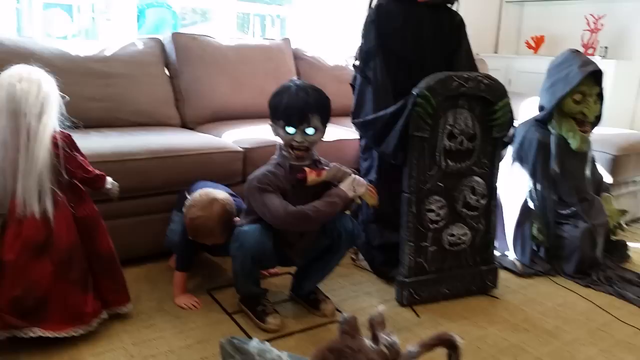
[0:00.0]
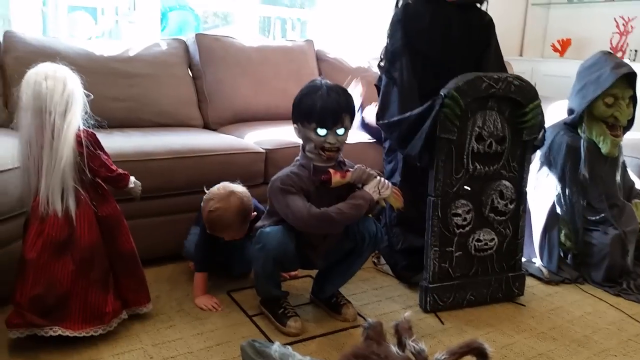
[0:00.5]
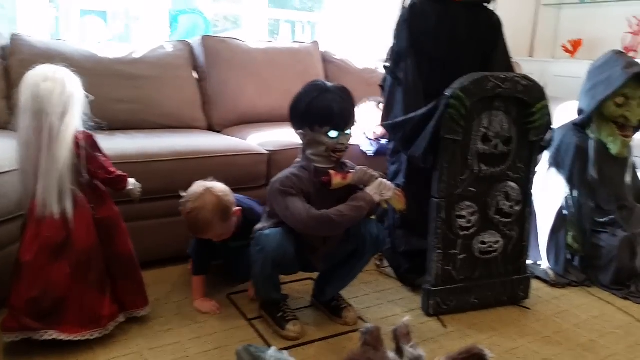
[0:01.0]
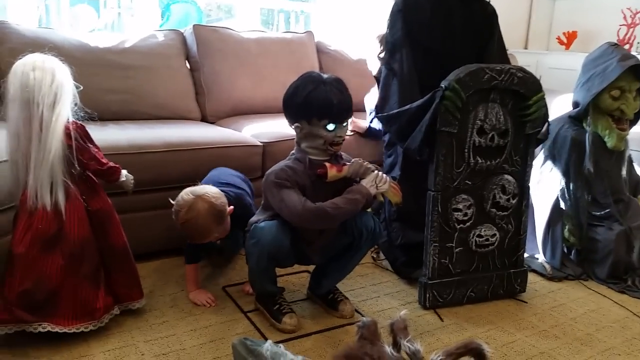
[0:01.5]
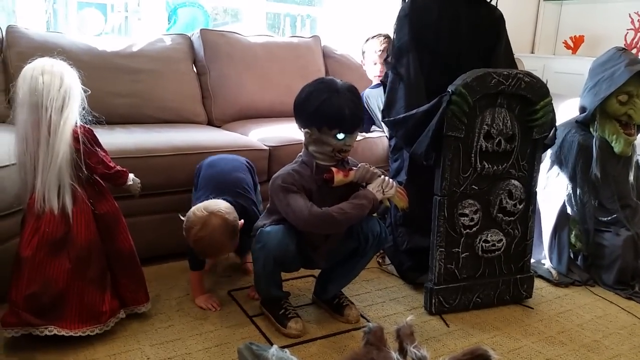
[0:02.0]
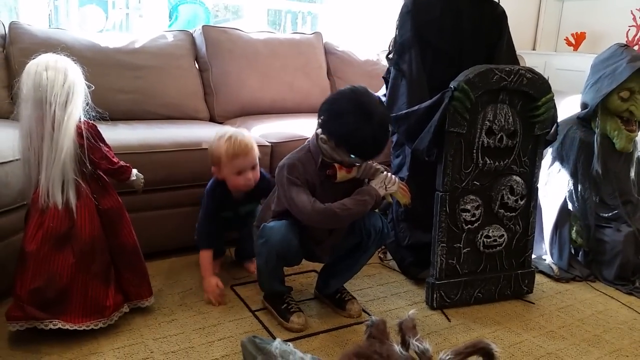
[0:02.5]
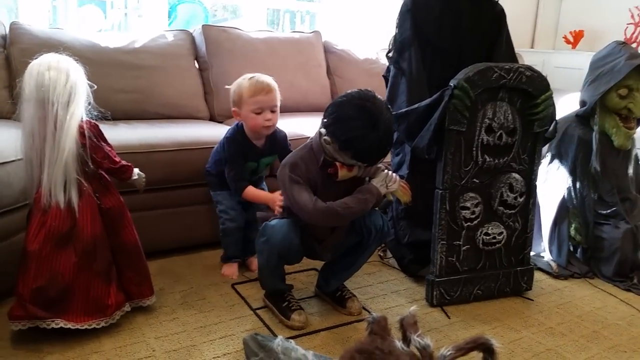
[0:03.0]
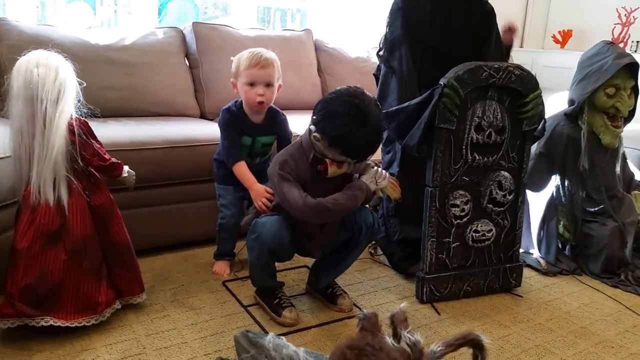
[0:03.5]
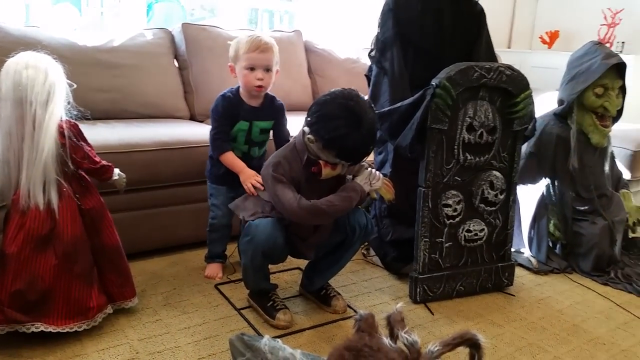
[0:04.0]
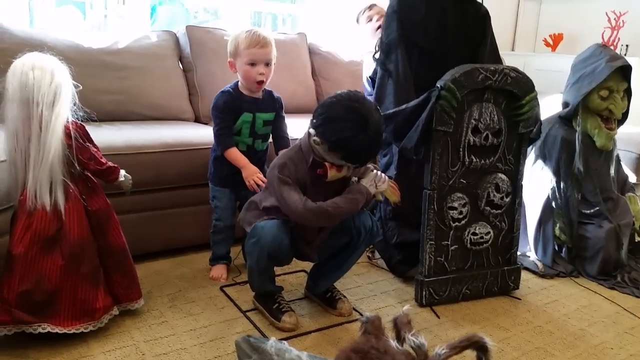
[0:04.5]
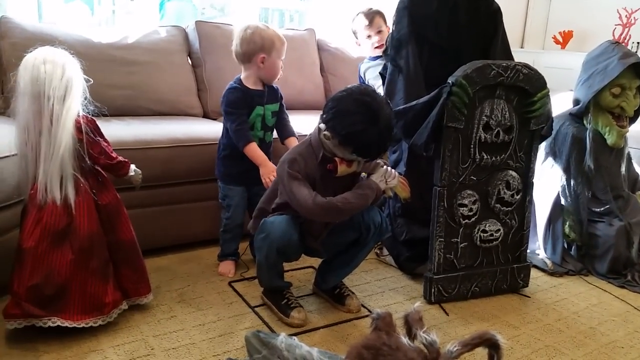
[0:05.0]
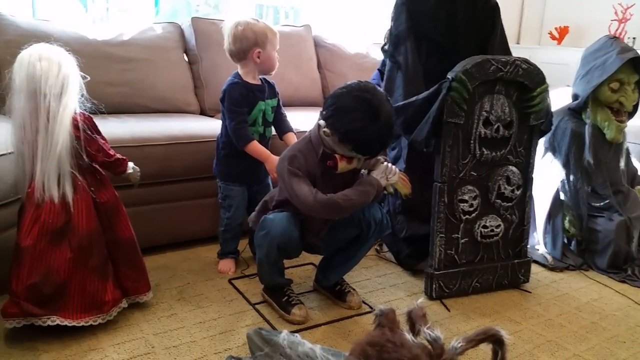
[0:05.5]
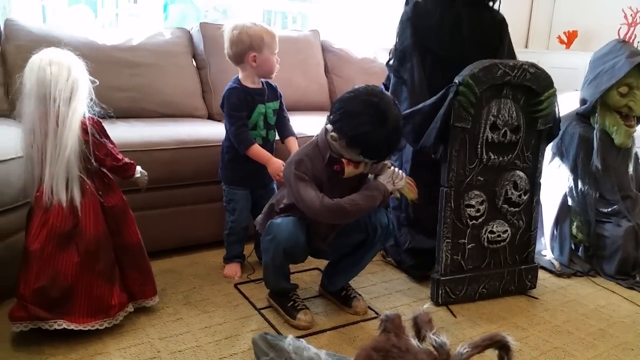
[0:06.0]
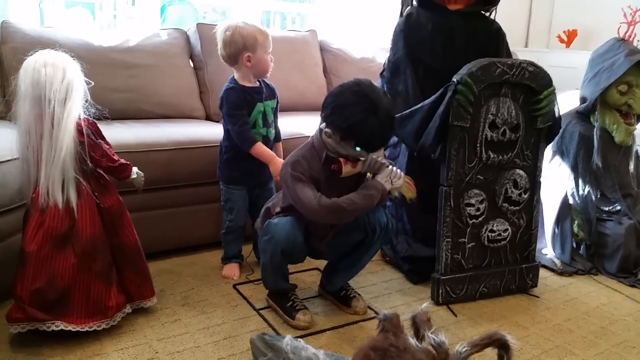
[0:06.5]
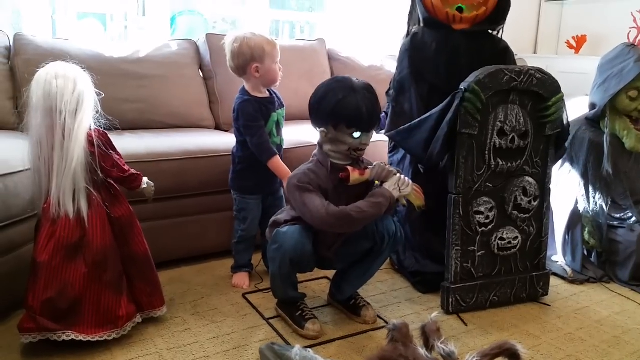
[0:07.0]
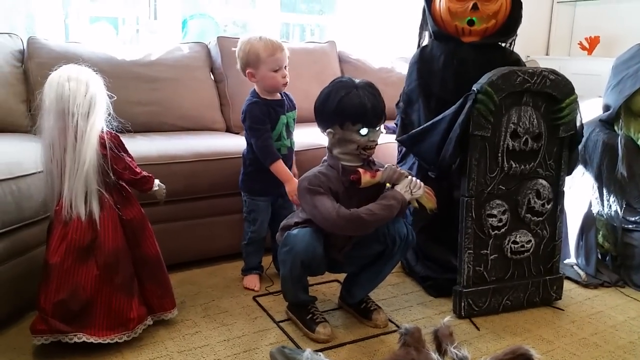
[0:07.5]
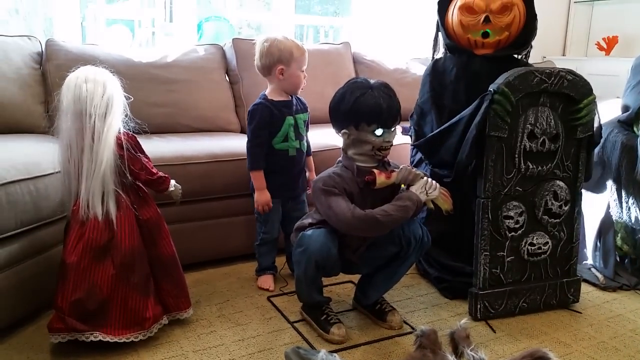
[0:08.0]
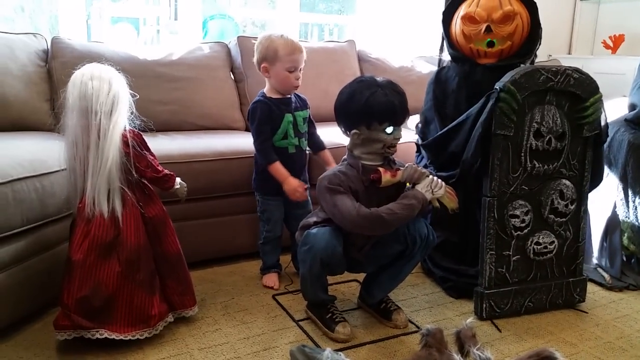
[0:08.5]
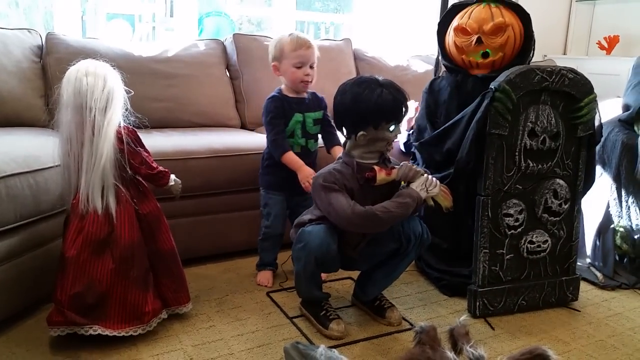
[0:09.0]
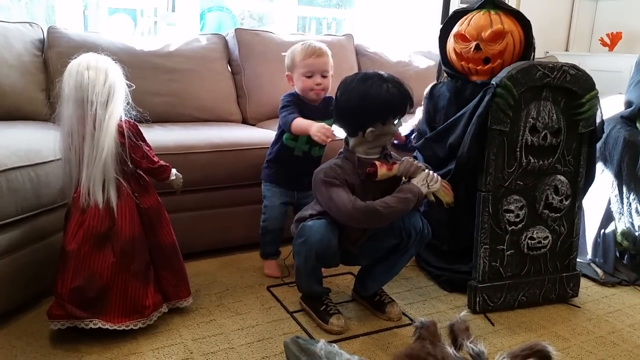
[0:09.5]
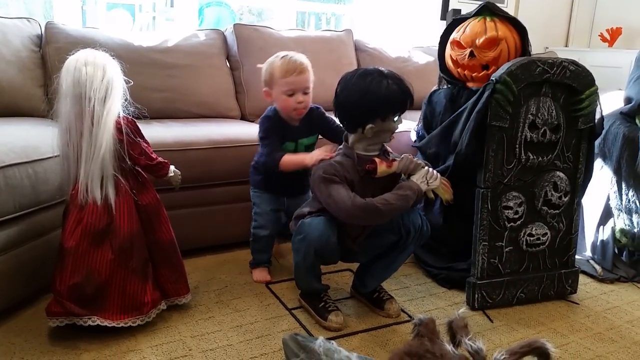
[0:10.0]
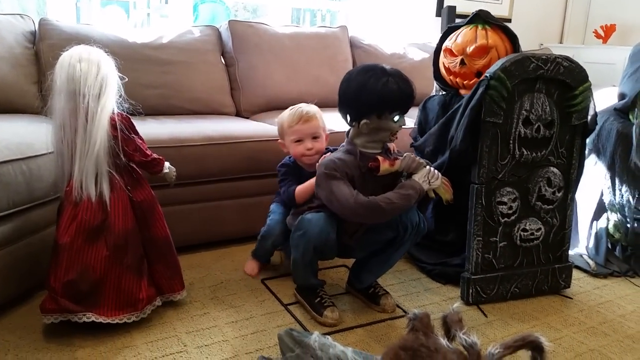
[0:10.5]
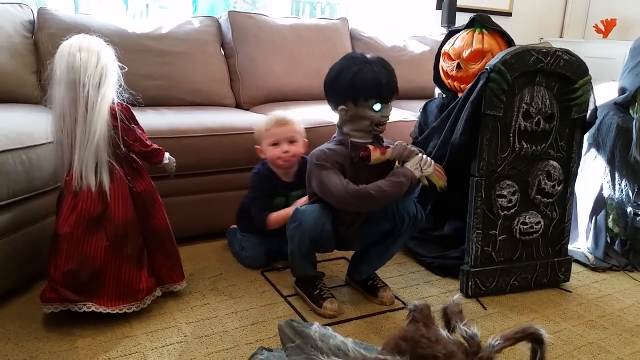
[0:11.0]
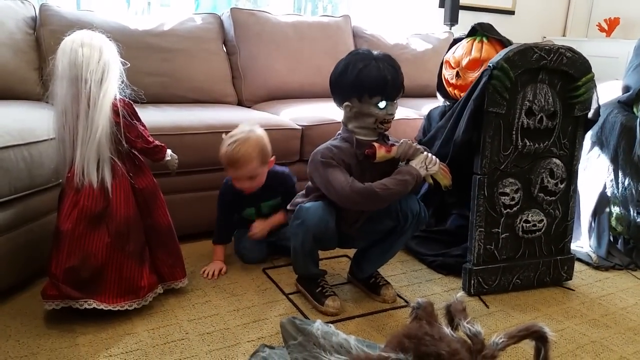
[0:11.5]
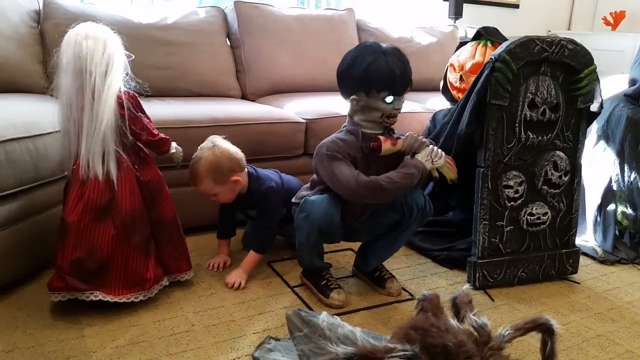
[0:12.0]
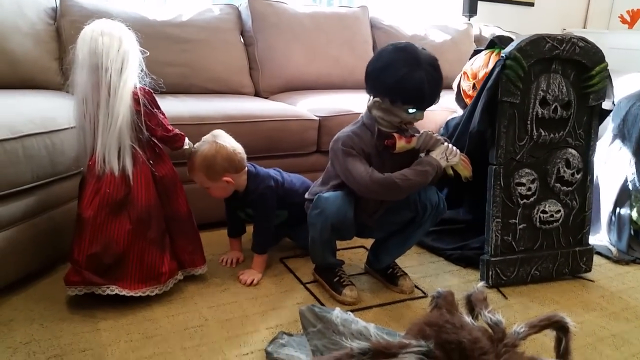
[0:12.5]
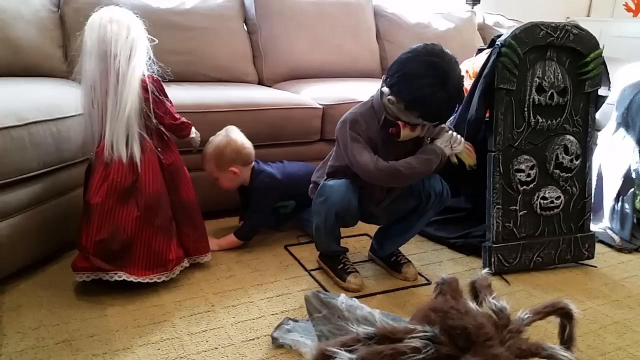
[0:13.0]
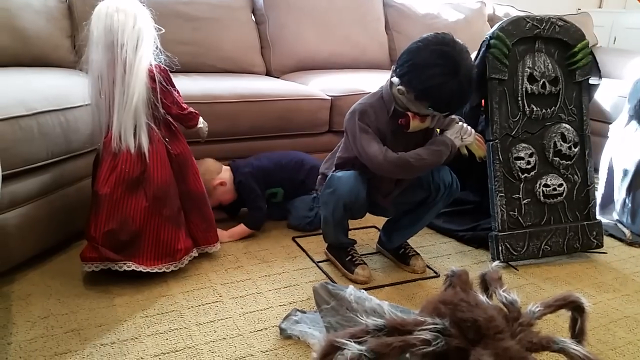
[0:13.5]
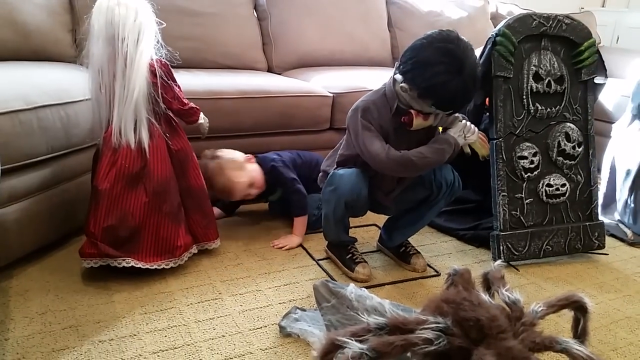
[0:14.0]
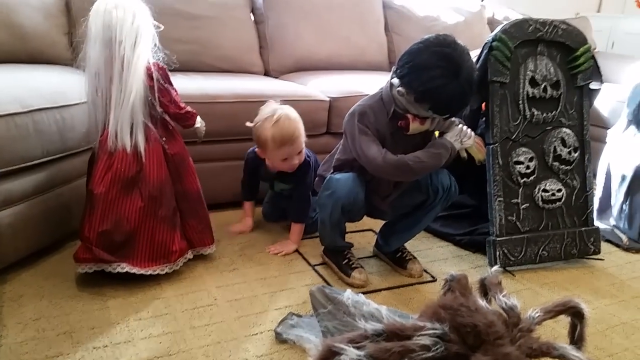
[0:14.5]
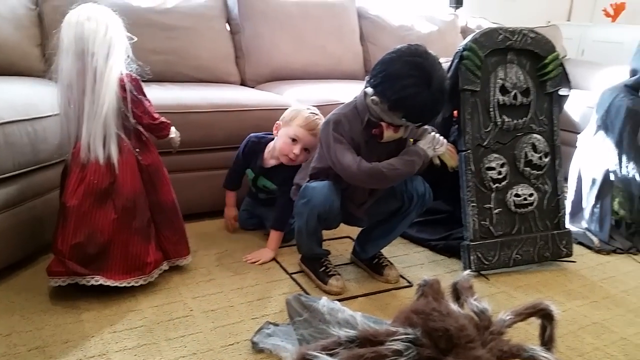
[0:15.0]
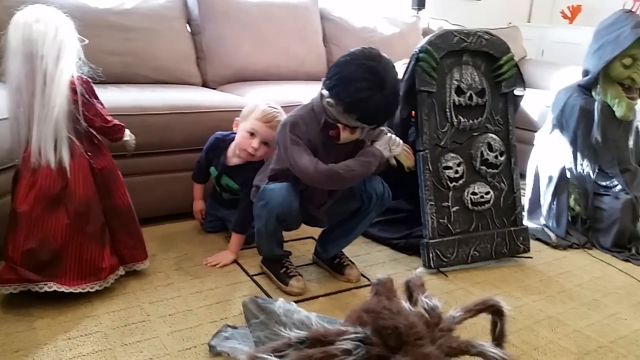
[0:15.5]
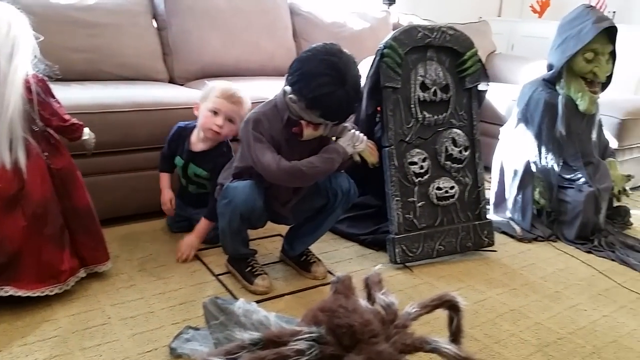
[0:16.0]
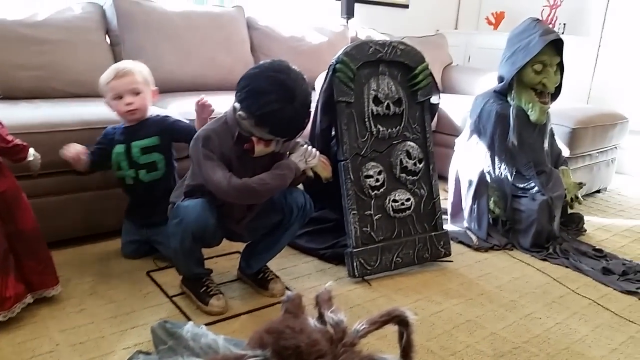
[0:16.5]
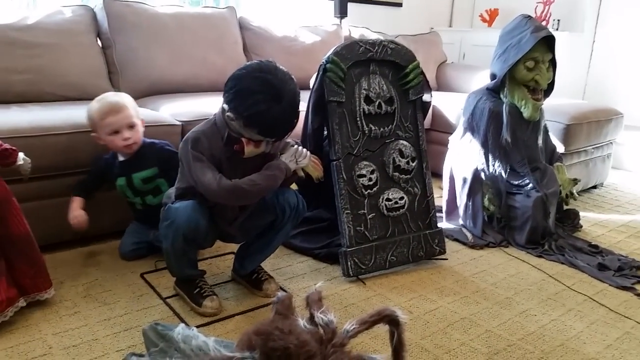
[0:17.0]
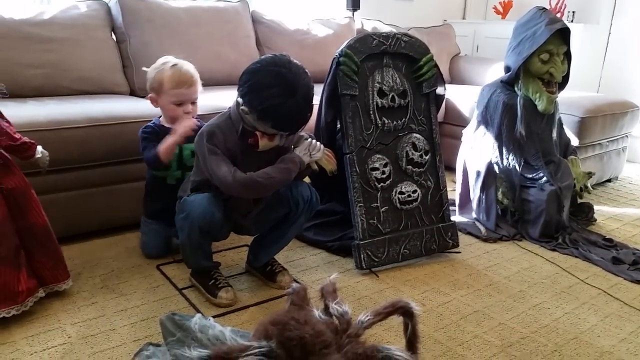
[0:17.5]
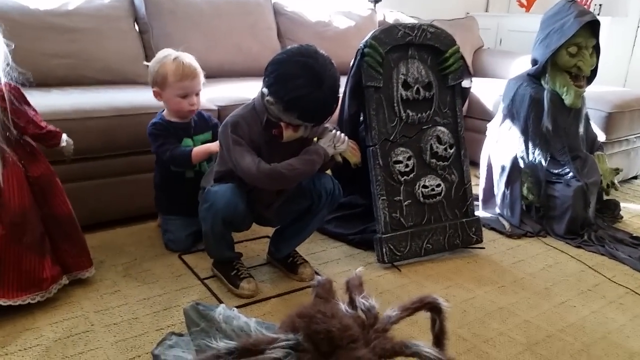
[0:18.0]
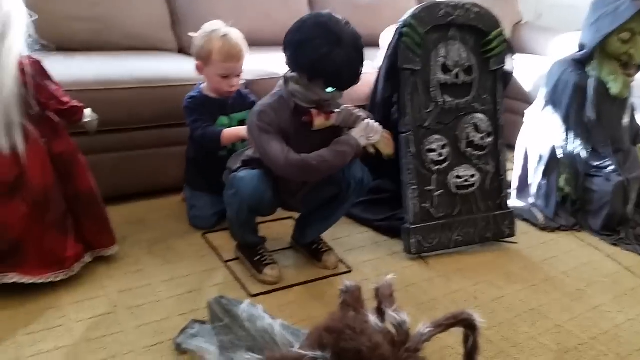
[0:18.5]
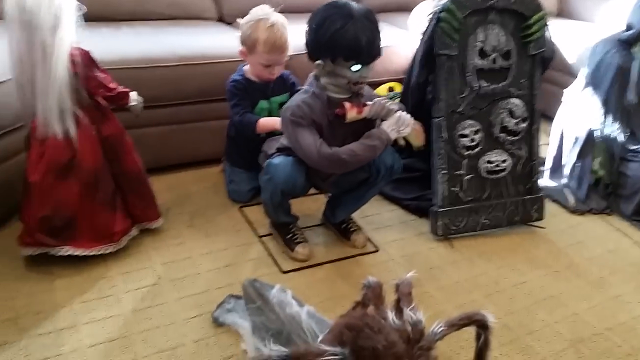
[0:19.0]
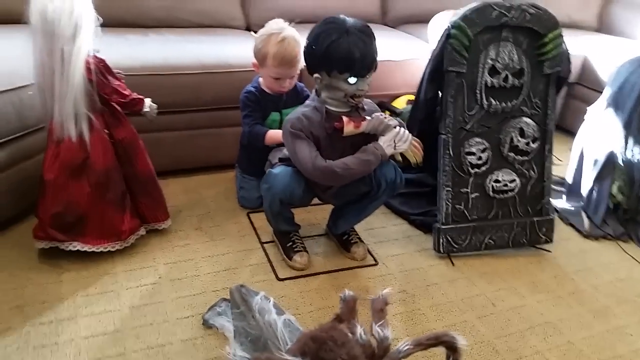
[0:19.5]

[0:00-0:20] The video appears to show Halloween decorations of an animatronic type. Two children climb around them, one of whom appears to be a toddler playing with the decorations. The first decoration is a child in a squatting position whose eyes glow when he puts his head up. Next to it is what appears to be a faux gravestone with spooky faces on it, and a jack-o-lantern in a black cape comes up from behind it. Next to that is a green witch wearing a black cape. To the left is what appears to be a doll of some sort, facing the couch behind them; it wears a burgundy dress and has long, straight, gray hair. The couch behind them all is a neutral-toned pillow couch.